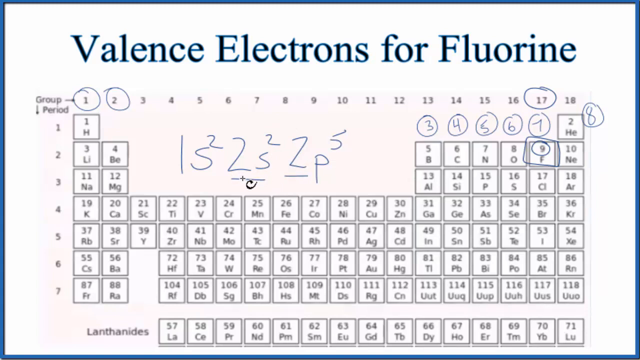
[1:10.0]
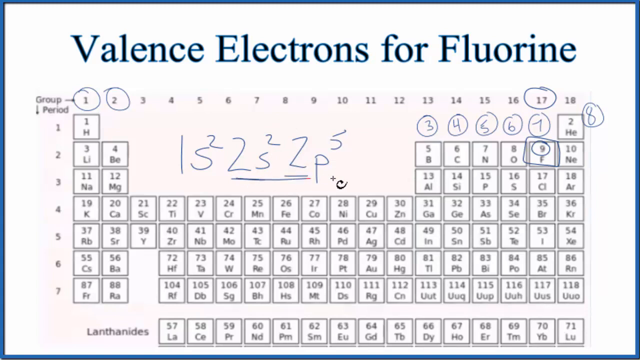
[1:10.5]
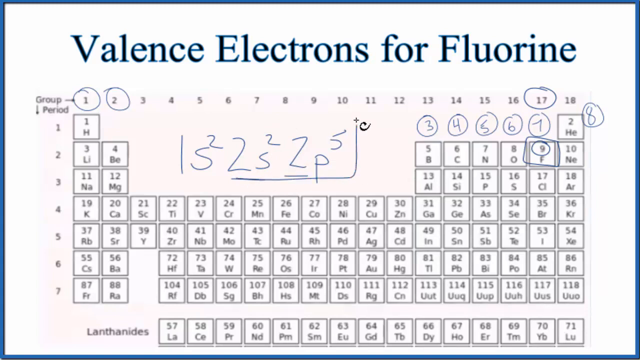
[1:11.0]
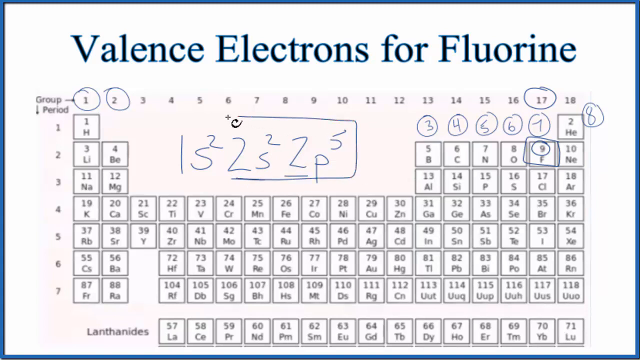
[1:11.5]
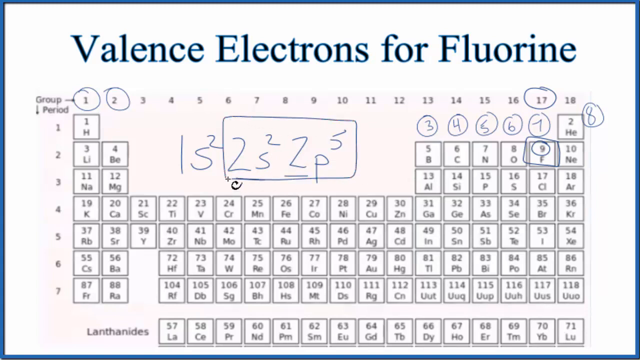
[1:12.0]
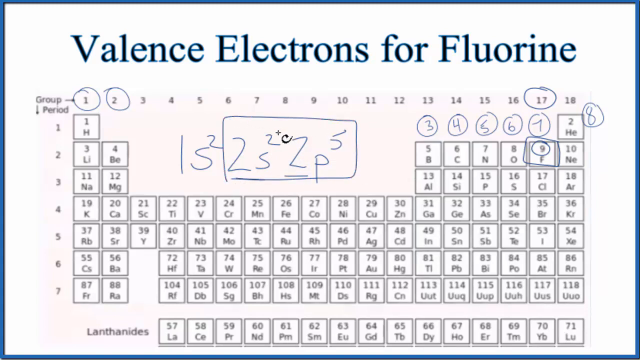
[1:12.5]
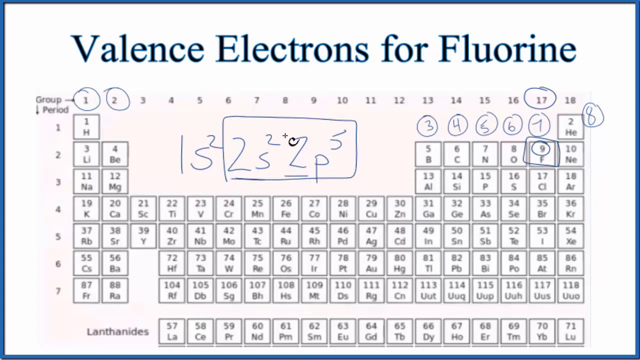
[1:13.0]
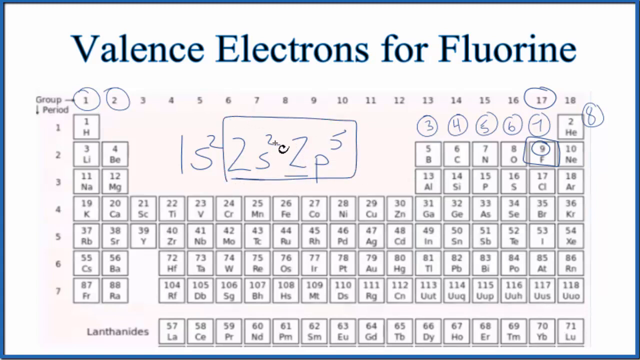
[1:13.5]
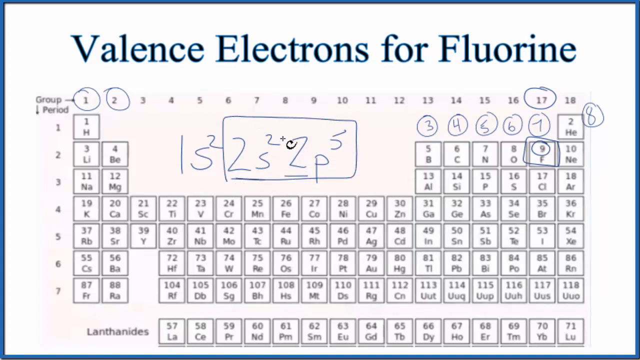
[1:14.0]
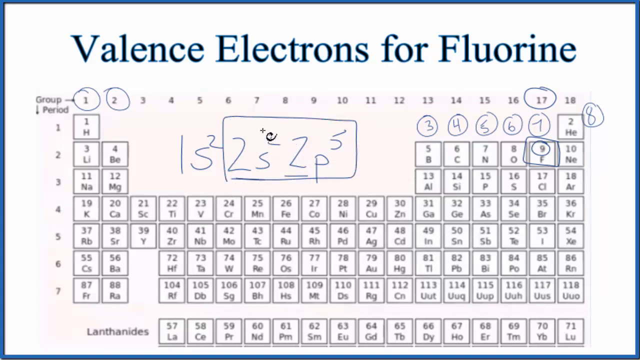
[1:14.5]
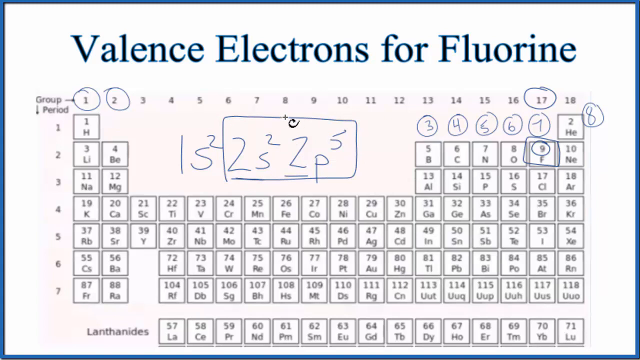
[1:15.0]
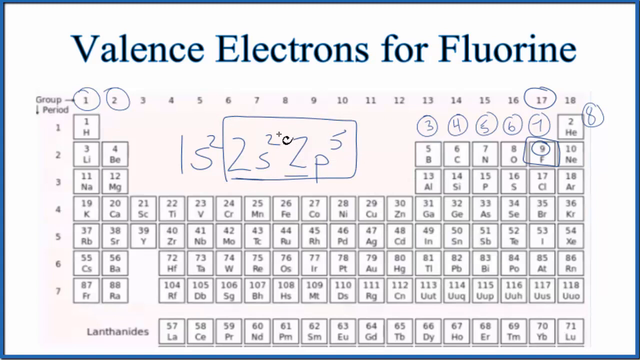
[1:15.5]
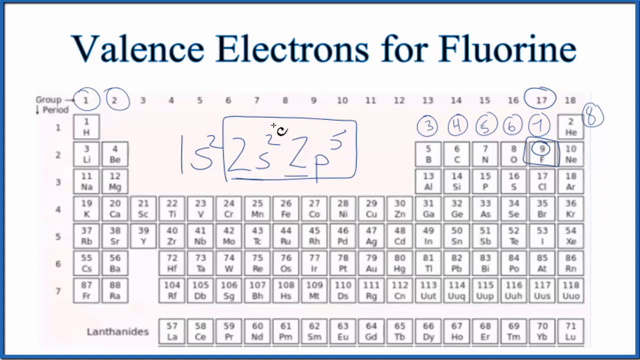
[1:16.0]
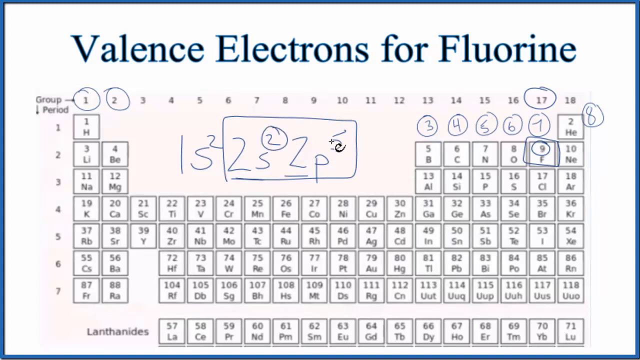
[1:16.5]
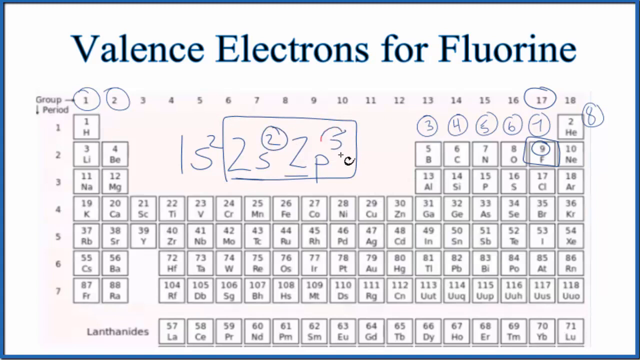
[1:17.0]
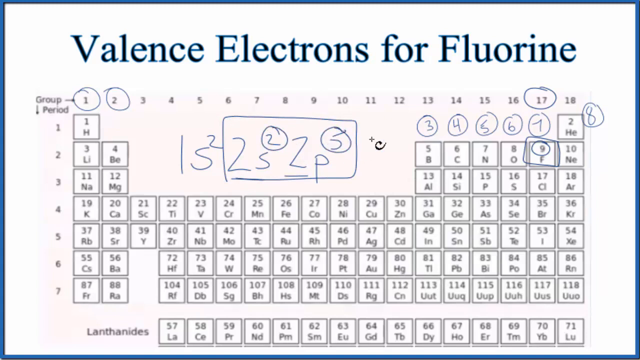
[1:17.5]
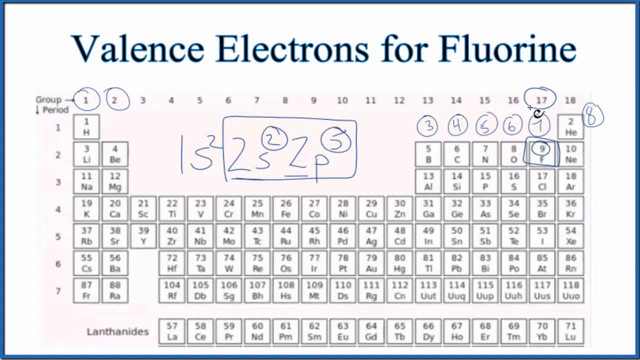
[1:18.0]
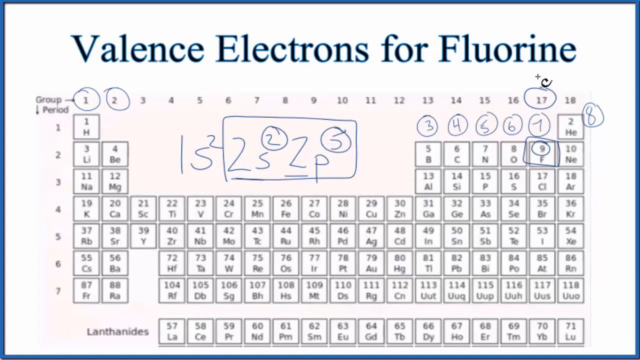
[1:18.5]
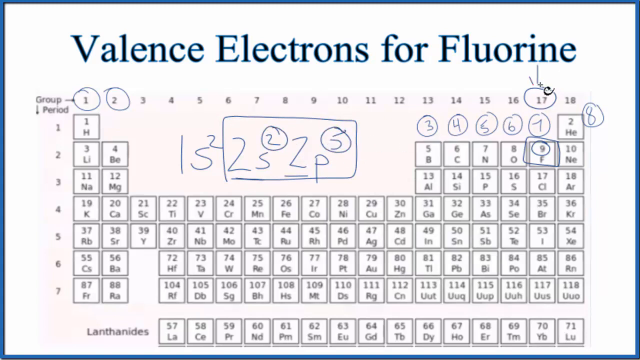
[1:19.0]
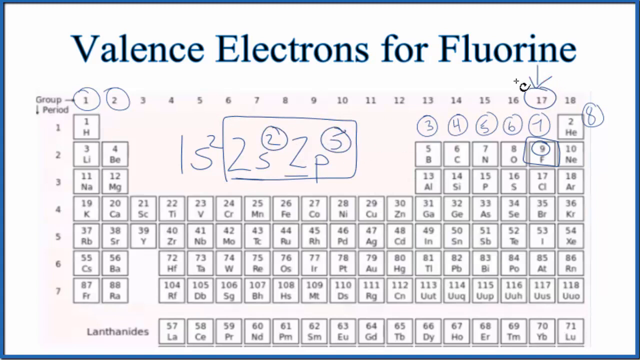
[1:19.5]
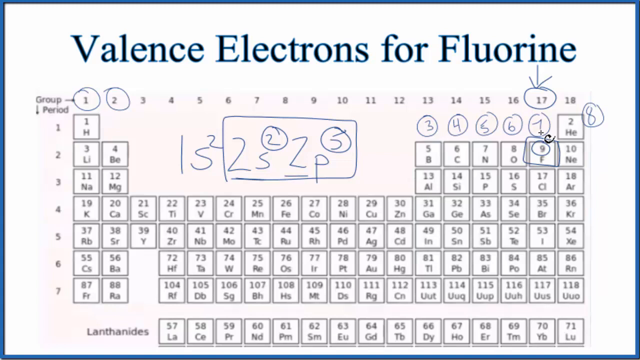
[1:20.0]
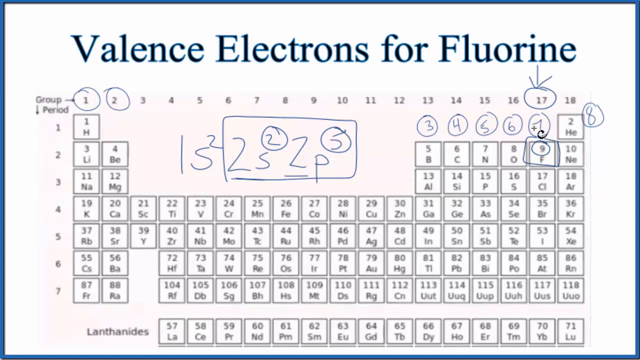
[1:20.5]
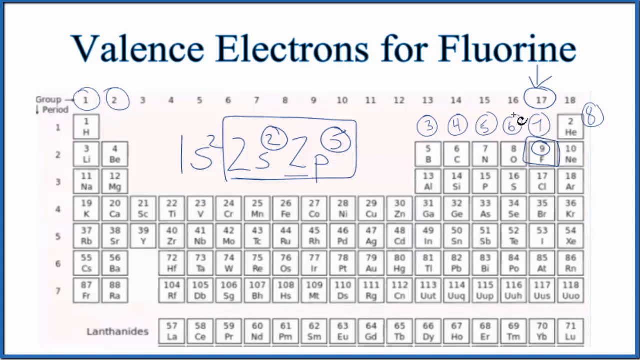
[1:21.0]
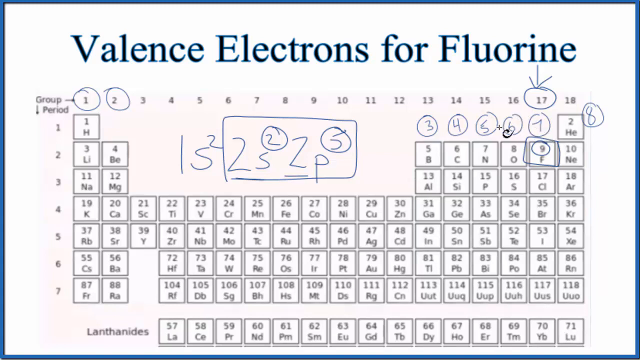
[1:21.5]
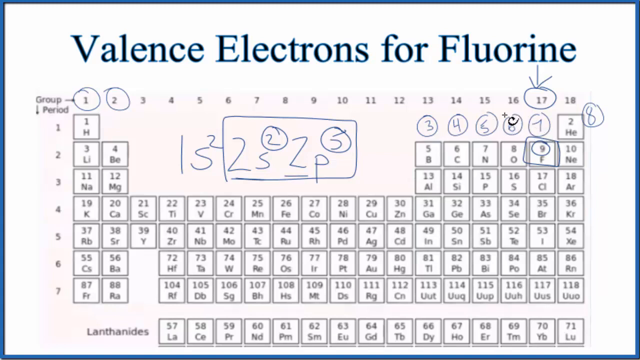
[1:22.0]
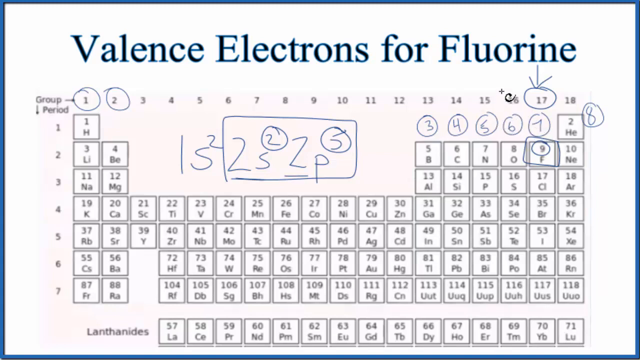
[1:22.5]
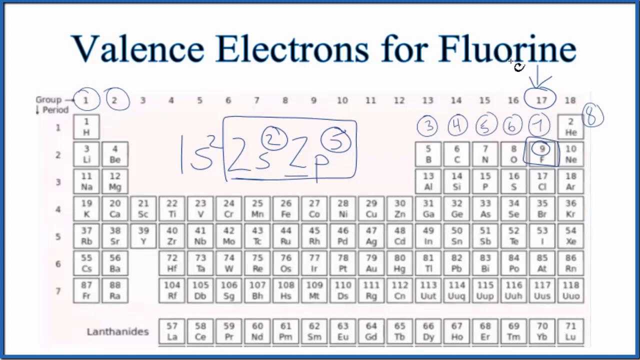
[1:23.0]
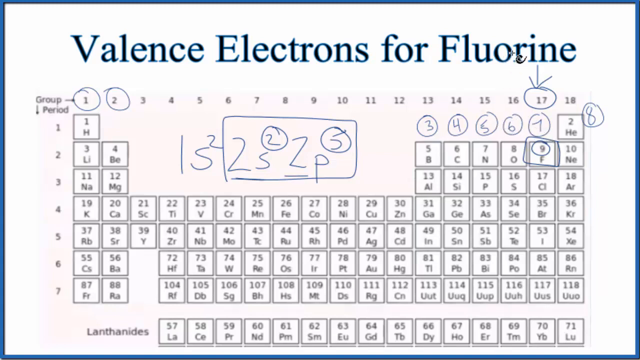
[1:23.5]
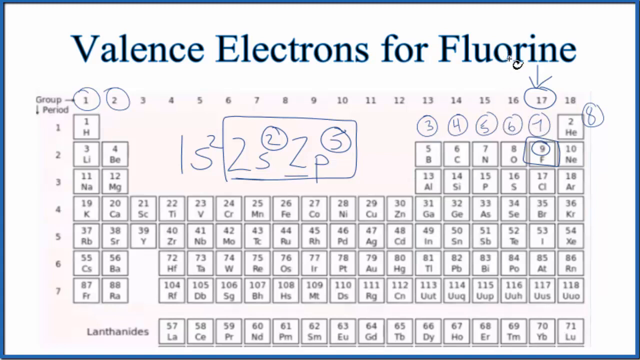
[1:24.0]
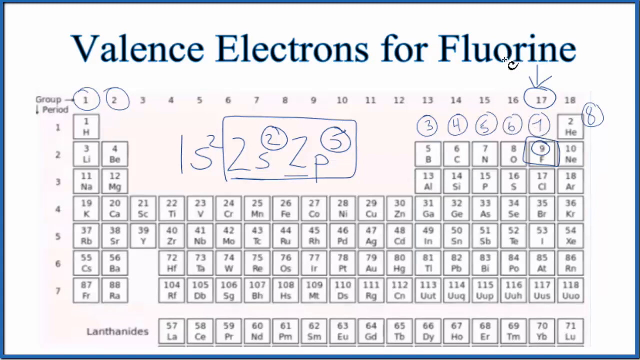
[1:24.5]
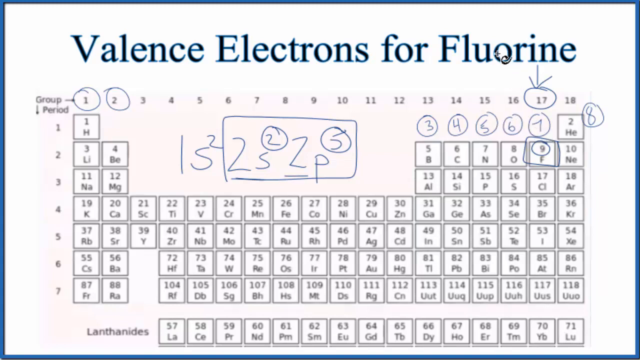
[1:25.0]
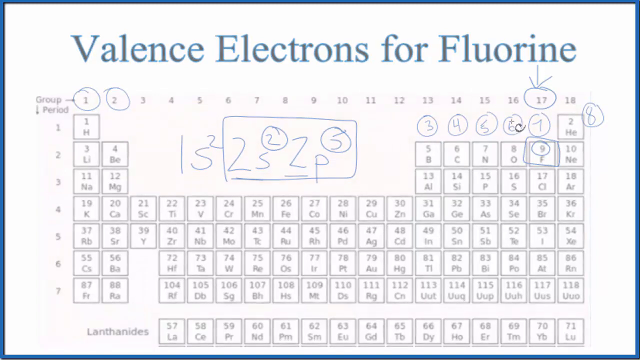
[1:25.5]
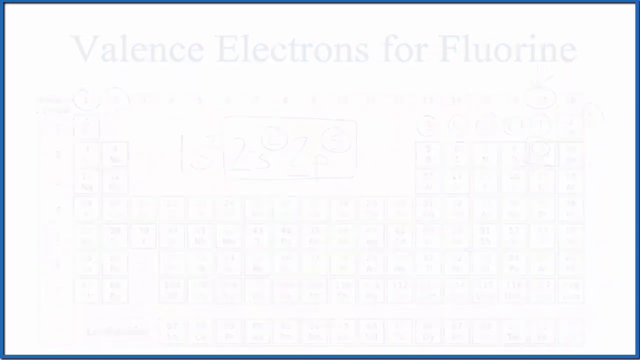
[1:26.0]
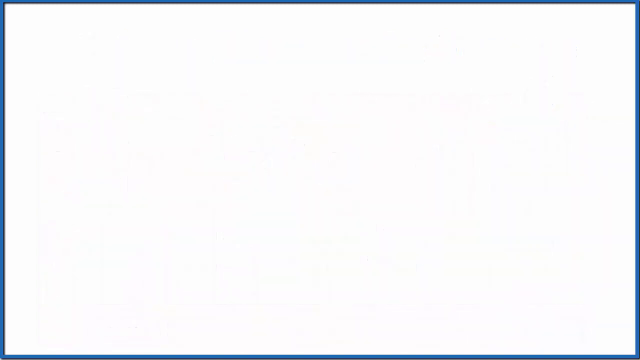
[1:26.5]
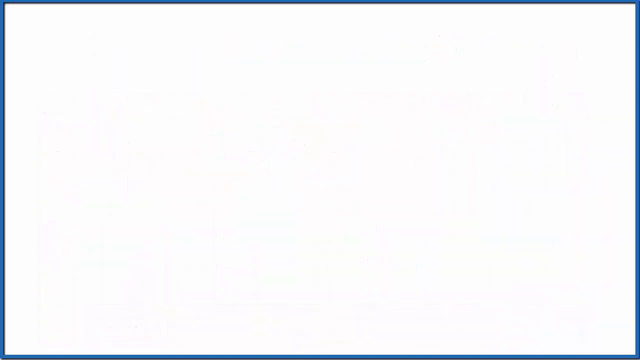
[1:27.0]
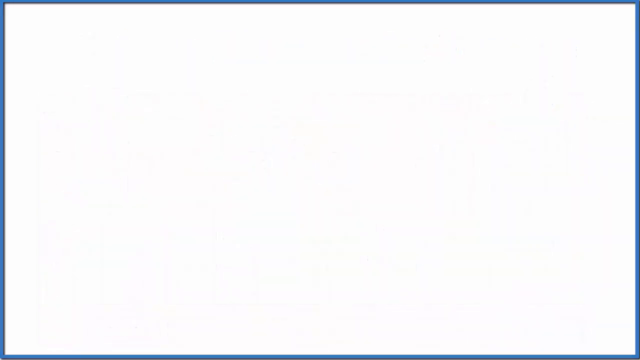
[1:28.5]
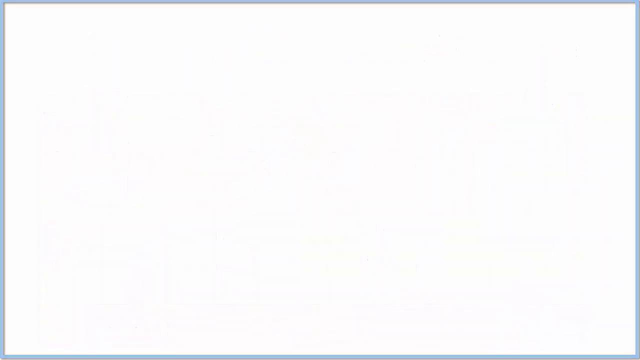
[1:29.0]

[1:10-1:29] The instructor appears to draw a box around some of what they wrote: the two, an S or a five, and the 2P with the five. Within the box, they circle the two and then the five. The numbers are written almost like exponents, as in math. At the top right, the cursor points to the O in fluorine in the title. The video then cuts to a blank white screen, just the background, with the element table no longer there, and it stays blank until the video ends.